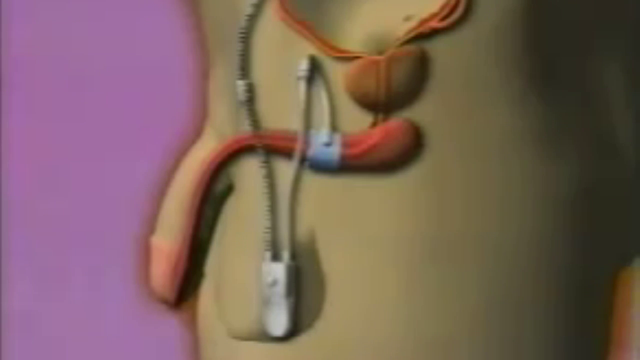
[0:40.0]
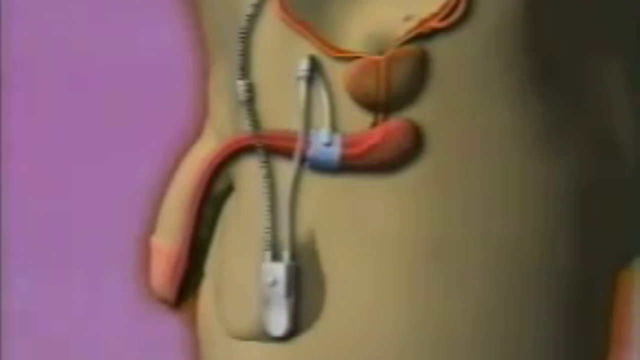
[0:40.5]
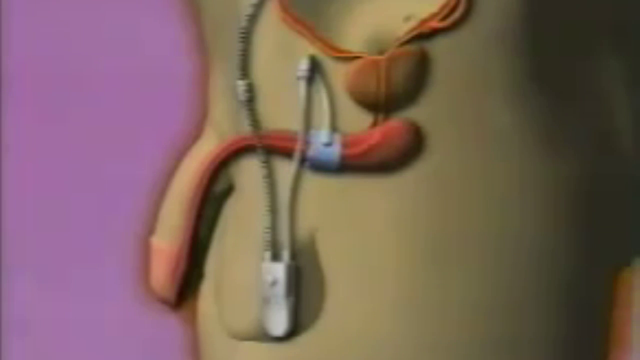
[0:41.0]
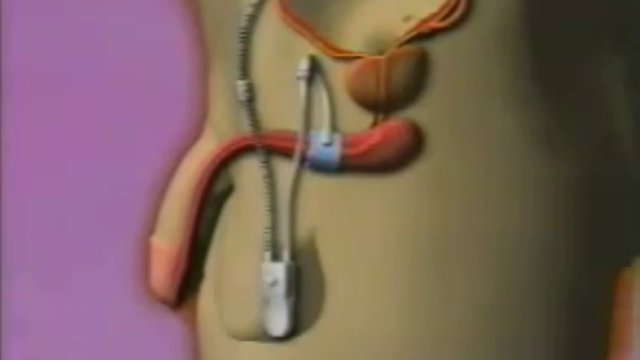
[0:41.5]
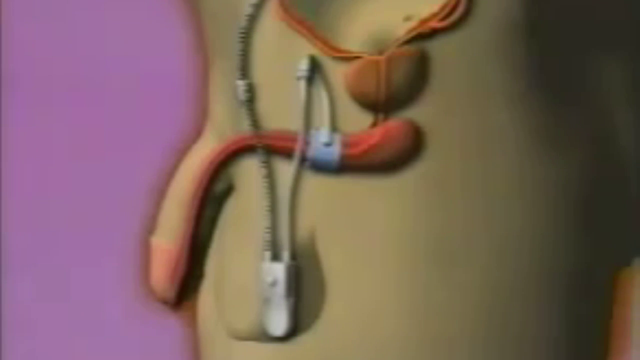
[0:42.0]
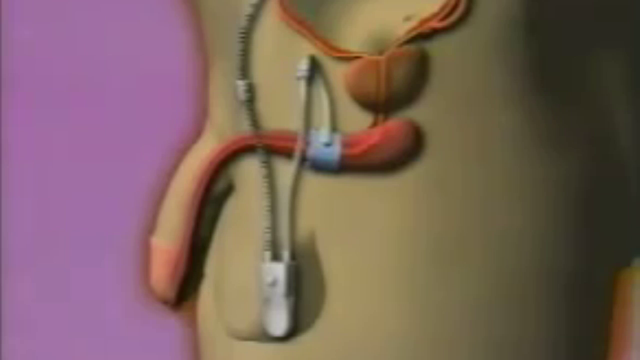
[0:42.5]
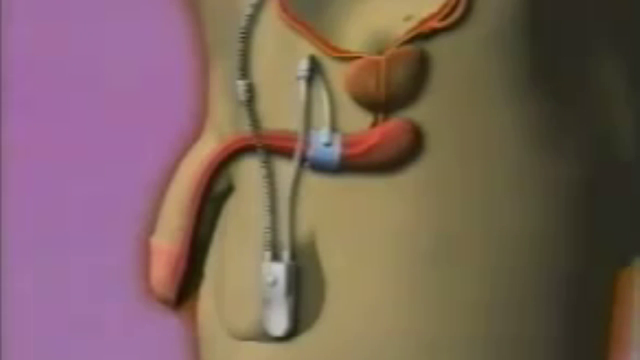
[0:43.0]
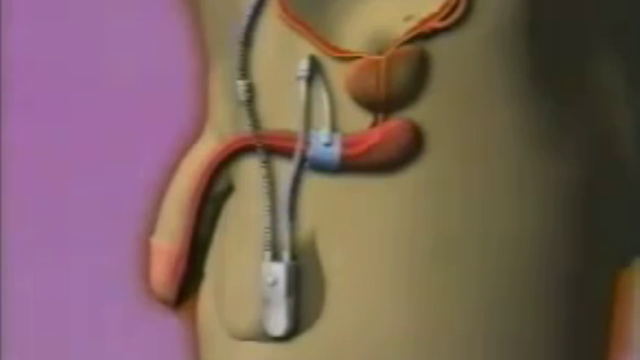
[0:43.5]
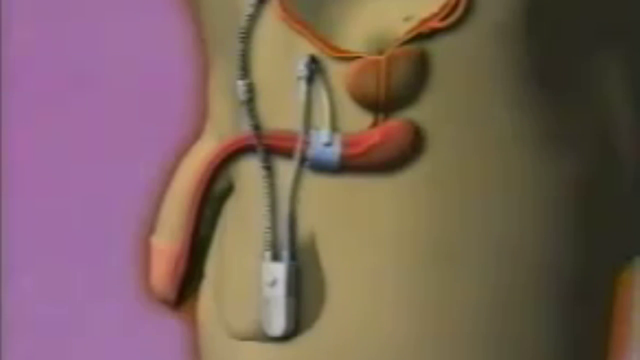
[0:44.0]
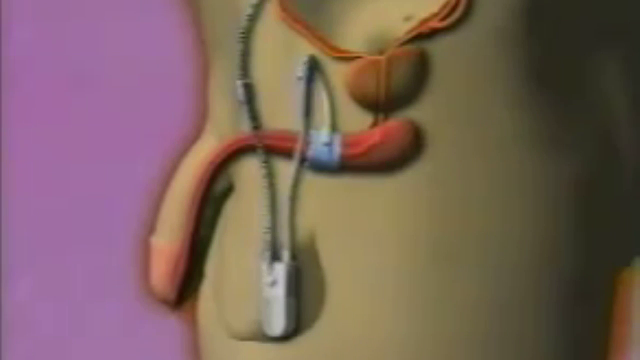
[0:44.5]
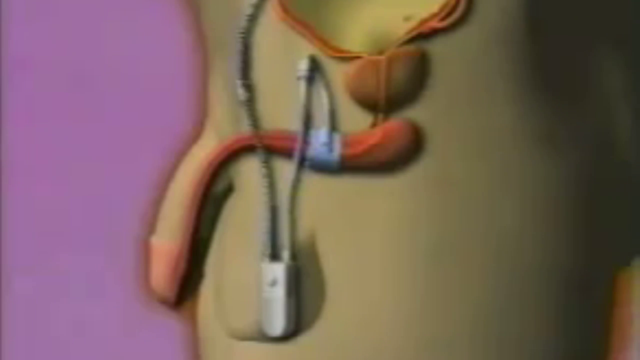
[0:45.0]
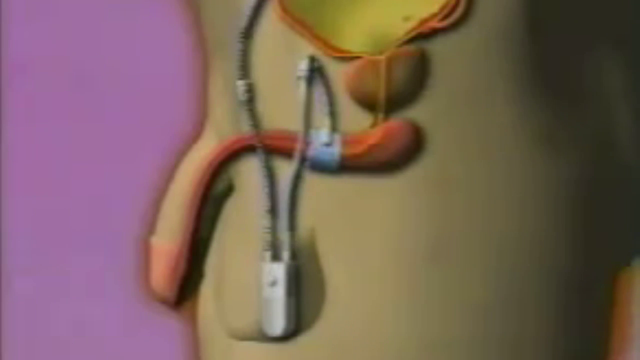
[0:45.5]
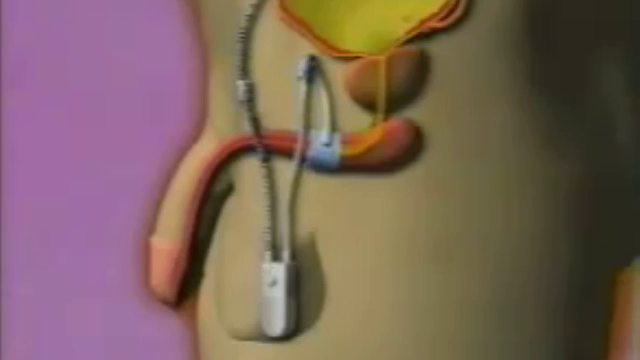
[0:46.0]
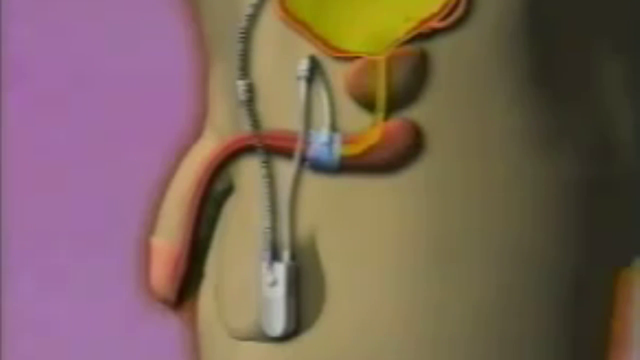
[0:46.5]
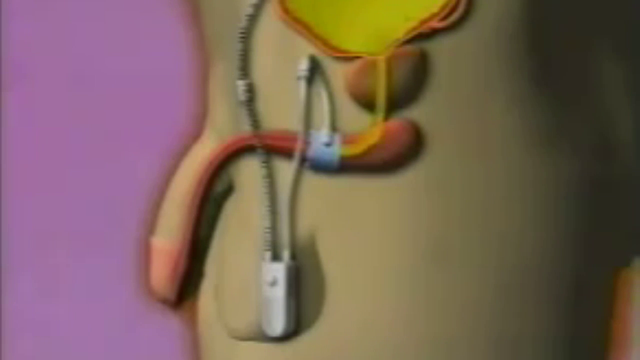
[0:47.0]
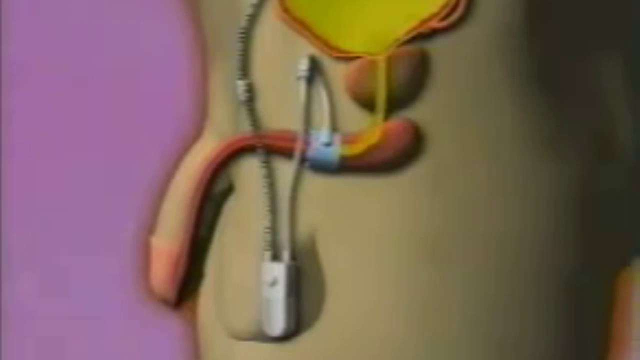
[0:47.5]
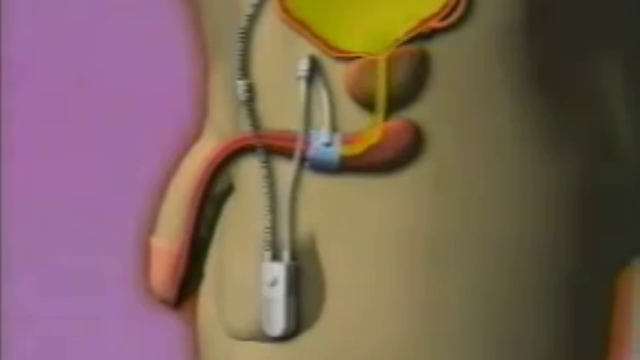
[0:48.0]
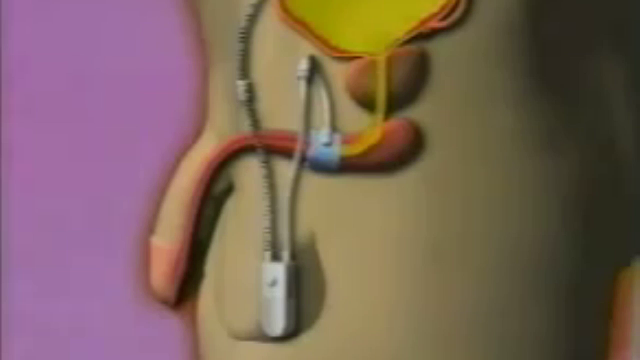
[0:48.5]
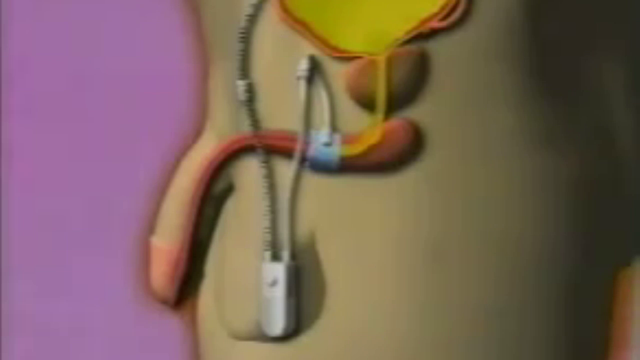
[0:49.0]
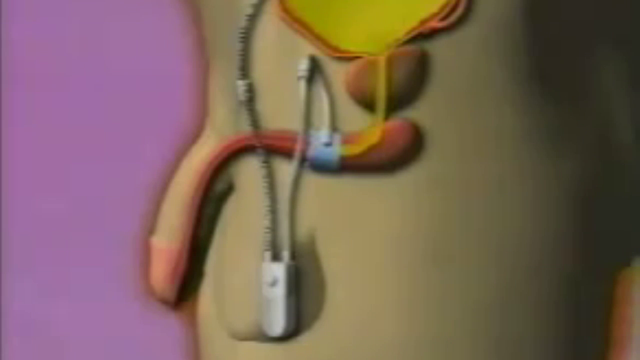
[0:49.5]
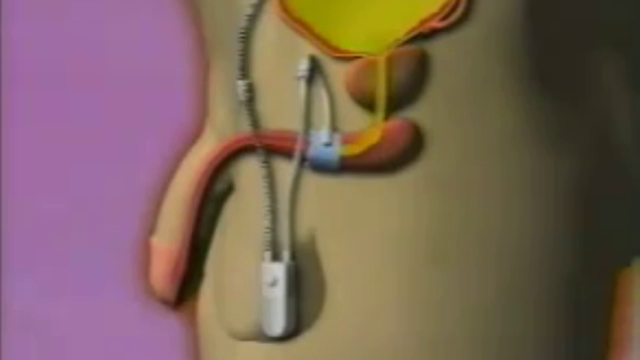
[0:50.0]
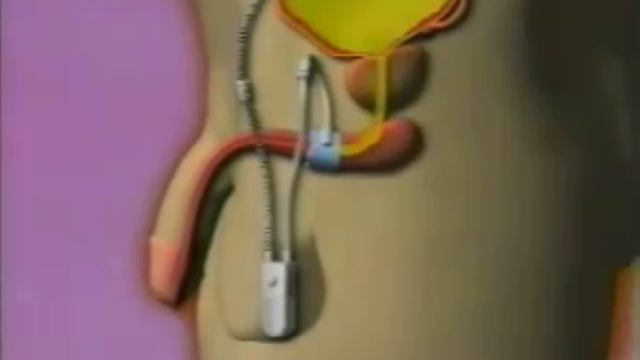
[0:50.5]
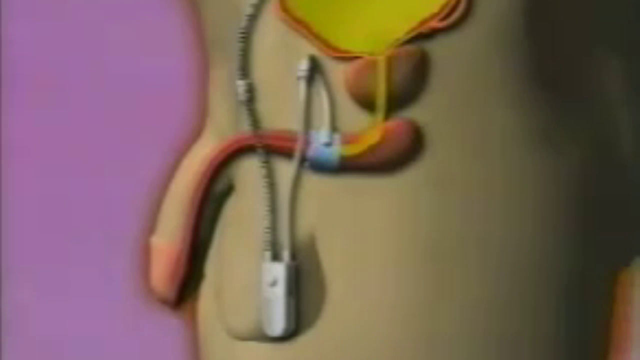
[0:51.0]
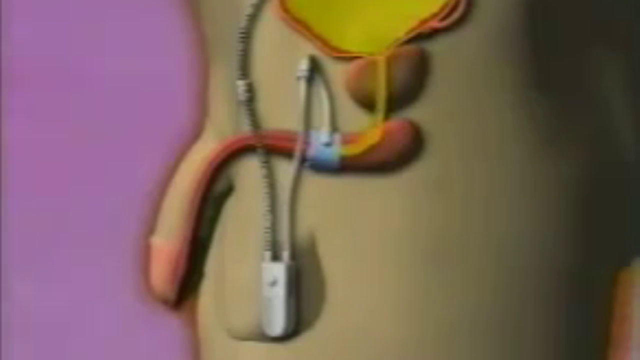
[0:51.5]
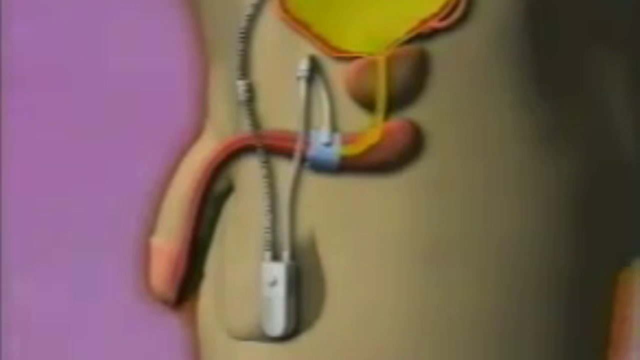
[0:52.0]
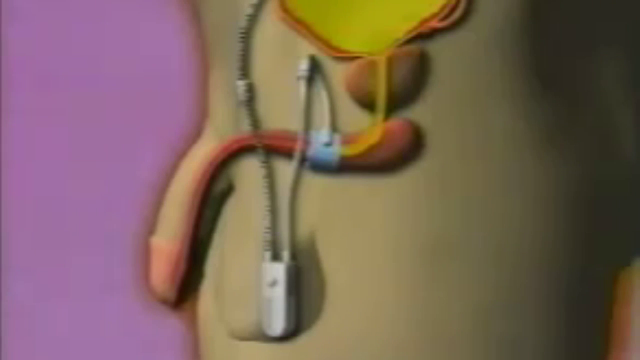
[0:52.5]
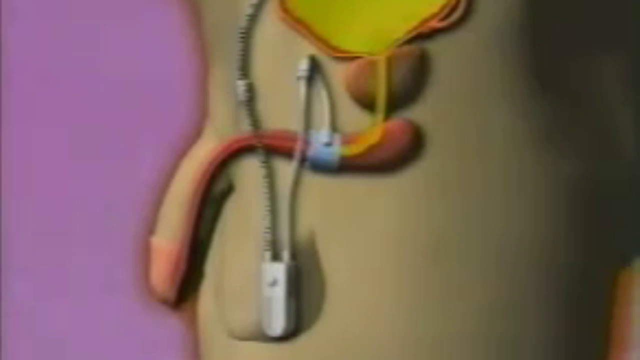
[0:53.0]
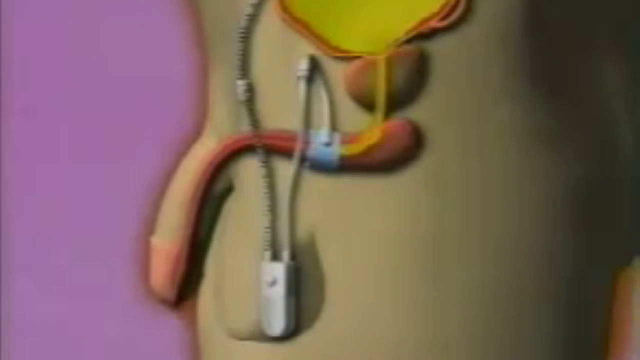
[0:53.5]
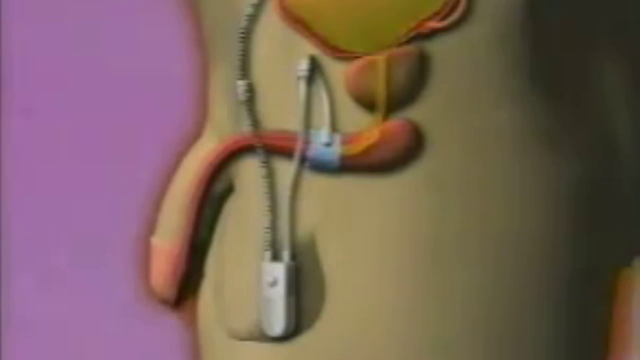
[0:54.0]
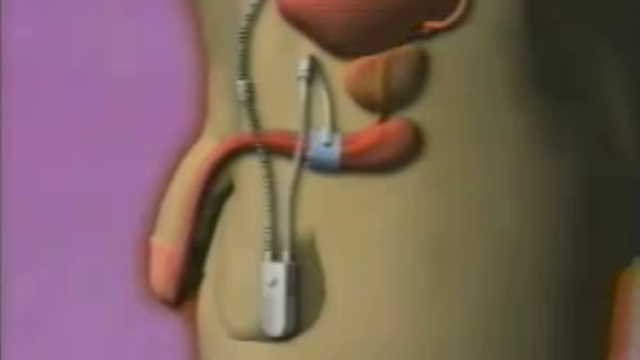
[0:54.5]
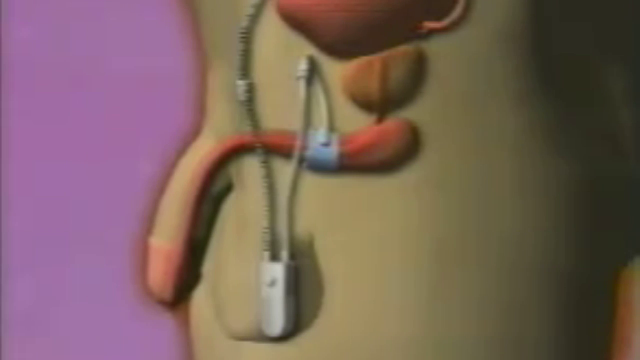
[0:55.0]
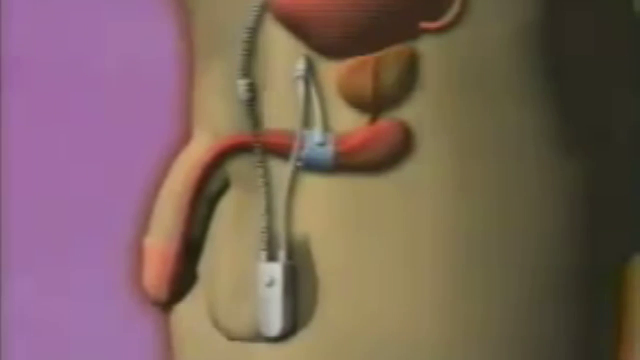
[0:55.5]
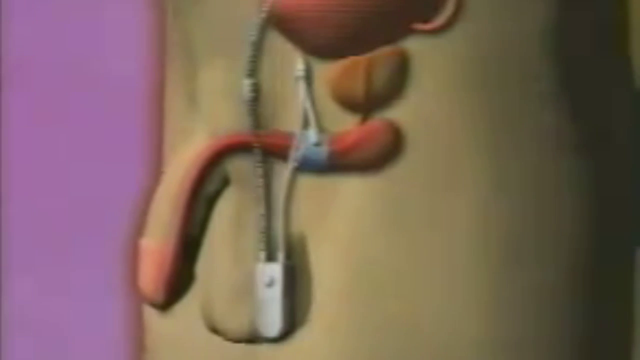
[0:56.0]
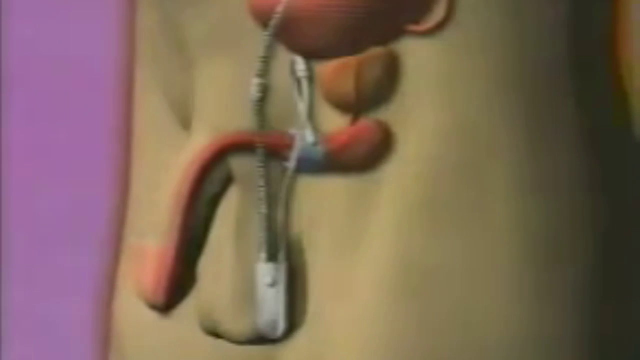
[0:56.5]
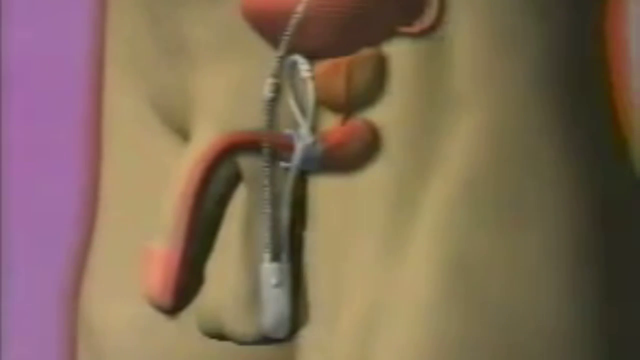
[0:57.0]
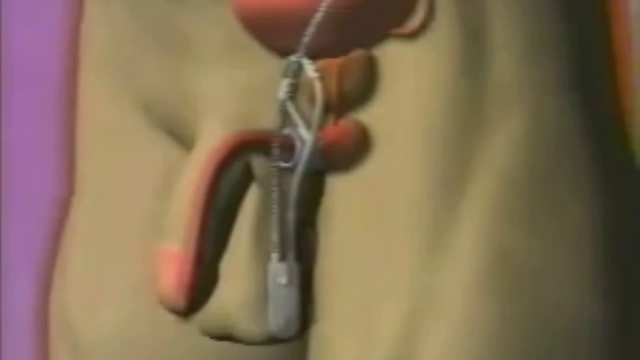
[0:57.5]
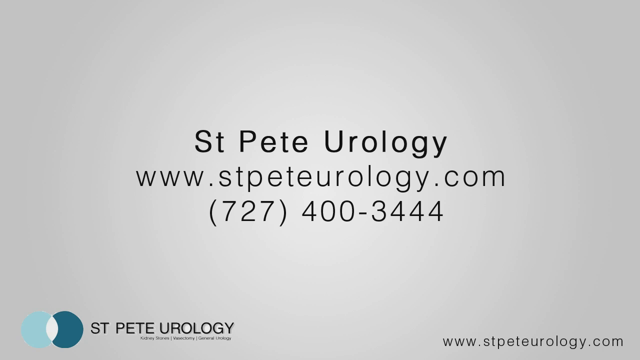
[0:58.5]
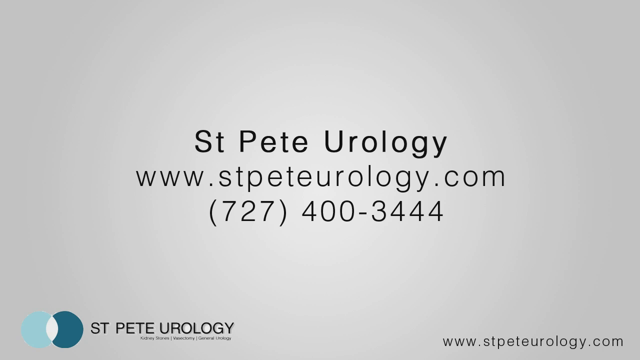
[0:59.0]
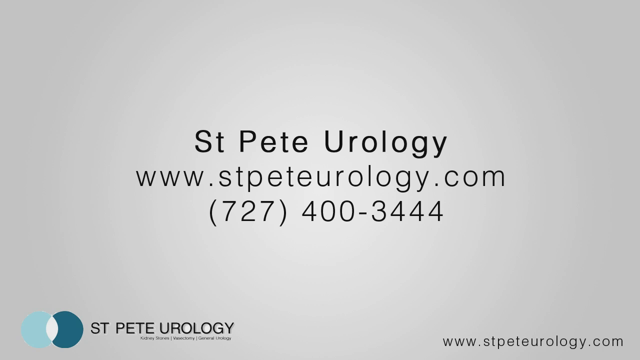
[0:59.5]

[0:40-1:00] The animation of the male anatomy continues, shown from a side angle and a front angle. The same part at the top is highlighted in yellow. The video is rectangular and completely computer generated, and the quality is not the best. Next to the male anatomy is a solid purple background, and there are no animals present. The male anatomy is colored red, light brown, orange and blue. Toward the end, a solid light gray background appears with black words and numbers in the middle of the screen that read "St. Pete Urology, www.stpeteurology.com, 727-400-3444."